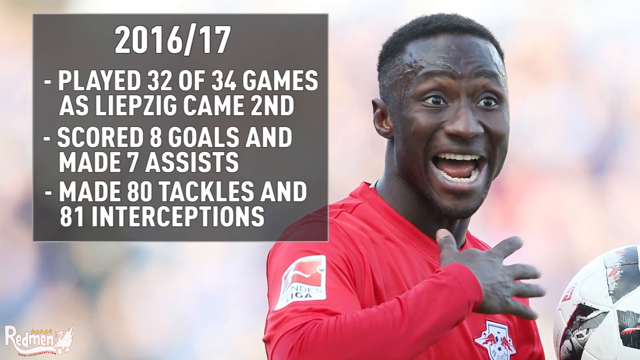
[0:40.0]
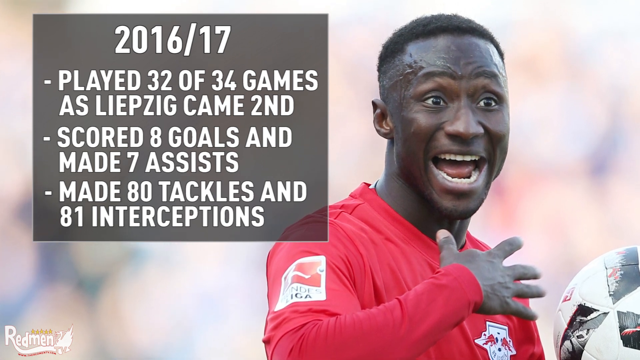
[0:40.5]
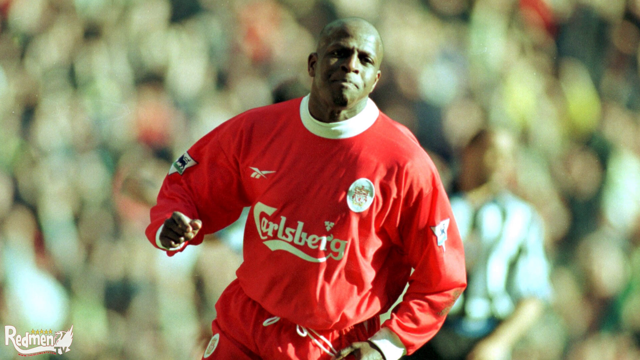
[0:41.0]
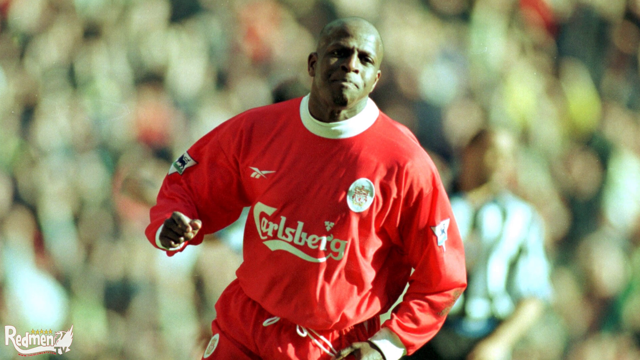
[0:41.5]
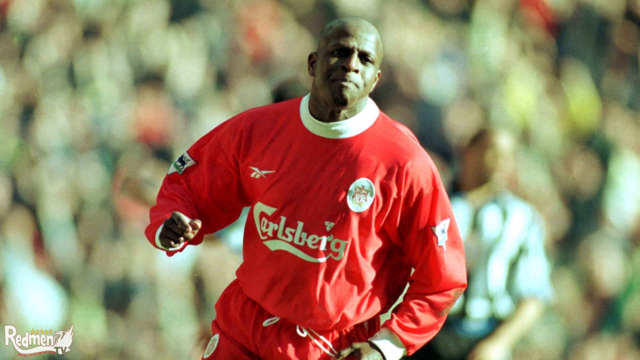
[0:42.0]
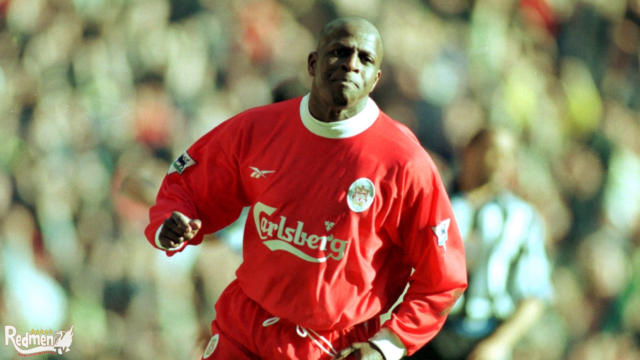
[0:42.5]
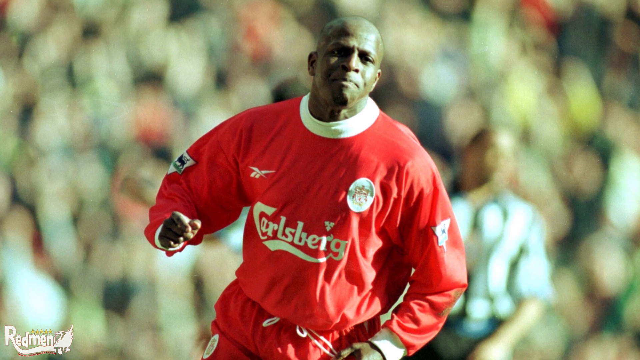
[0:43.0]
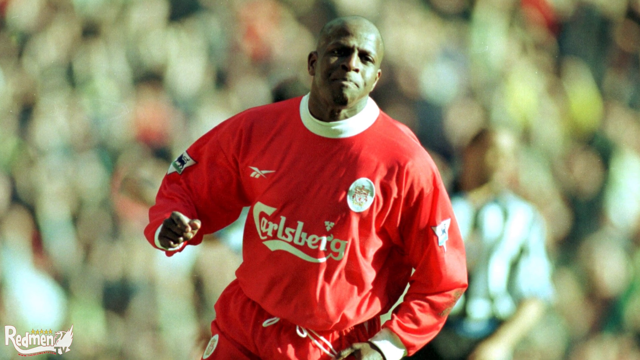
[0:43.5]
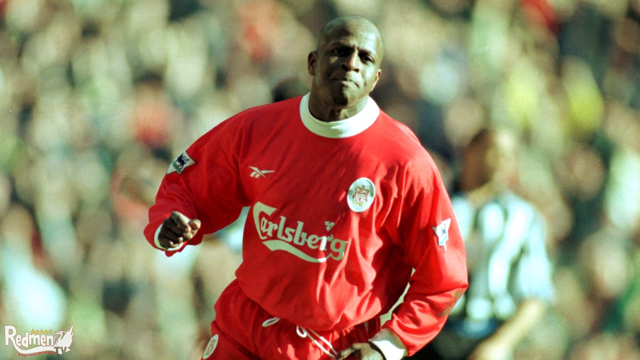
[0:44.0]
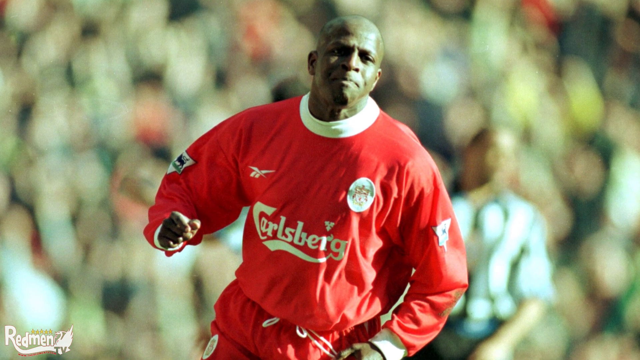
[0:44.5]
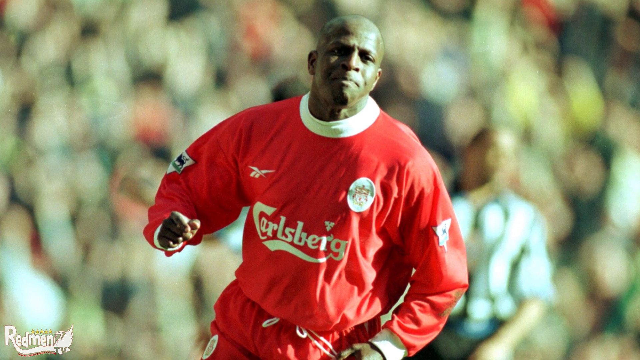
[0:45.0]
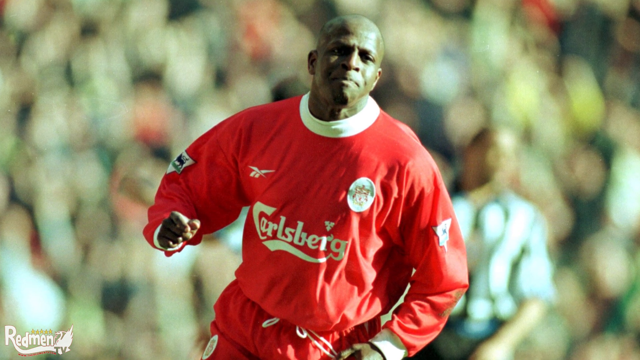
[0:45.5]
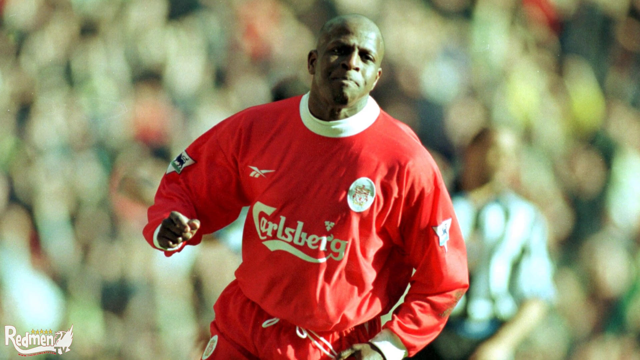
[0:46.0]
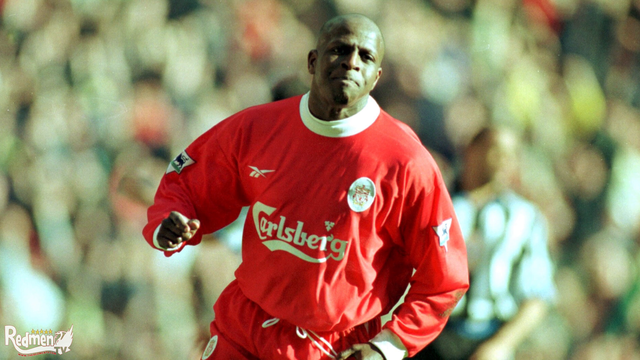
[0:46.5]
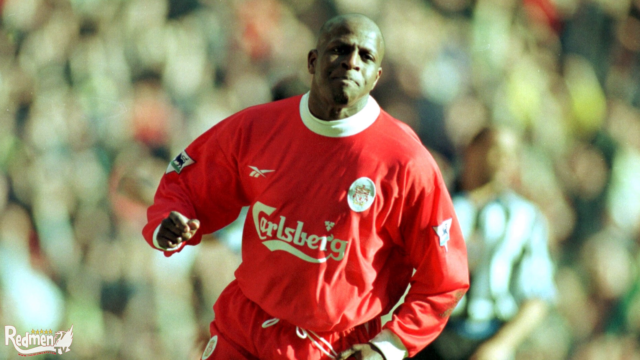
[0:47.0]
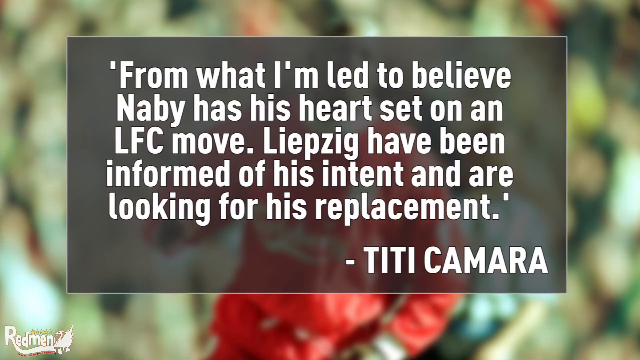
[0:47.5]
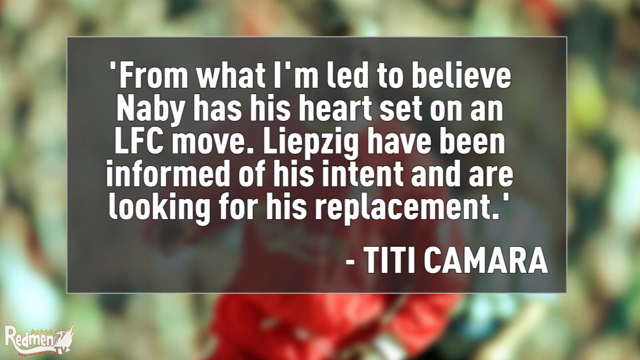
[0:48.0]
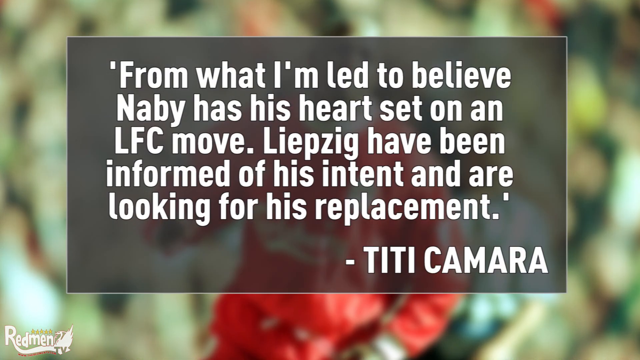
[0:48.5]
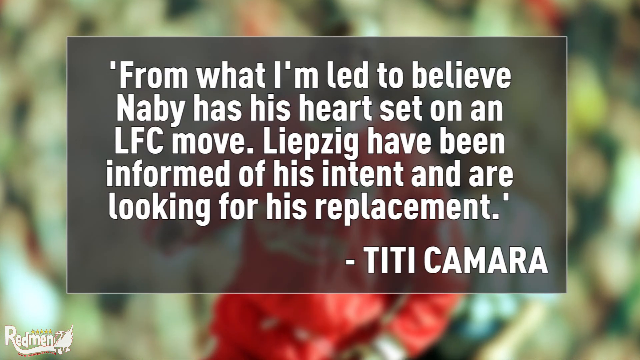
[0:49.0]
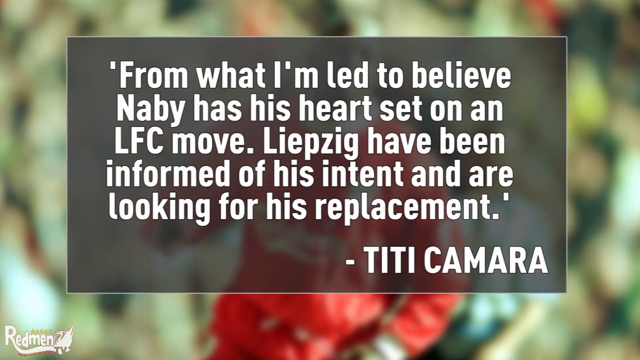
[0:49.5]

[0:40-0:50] A soccer player in a red jersey is shown with text that reads: 2016-17, played 32 of 34 games as Leipzig came second, scored eight goals and made seven assists, made 80 tackles and 81 interceptions. An older man in a red jersey or jacket then appears. Finally, a quote is shown, beginning "from what I've led to believe maybe Naby has his heart so set on it LFC move", stating that Leipzig "have been informed of his intent and are looking for his replacement", and naming Camara, spelled C-A-M-A-R-A.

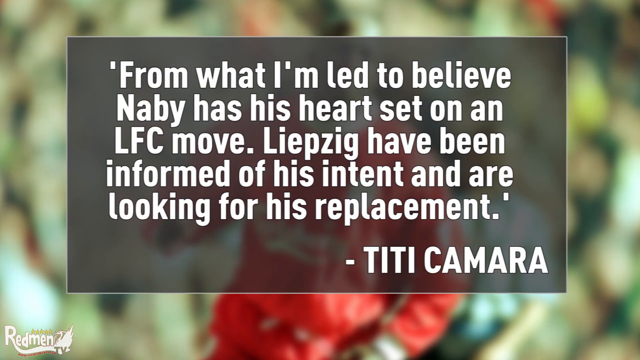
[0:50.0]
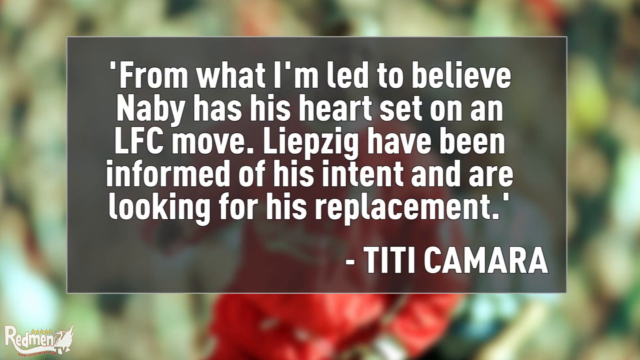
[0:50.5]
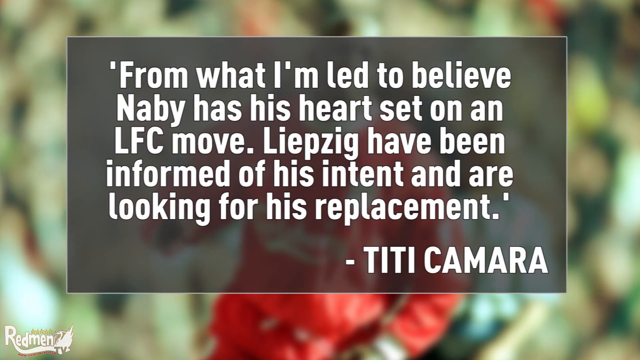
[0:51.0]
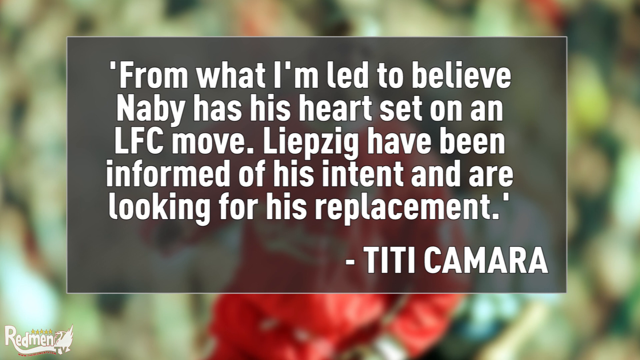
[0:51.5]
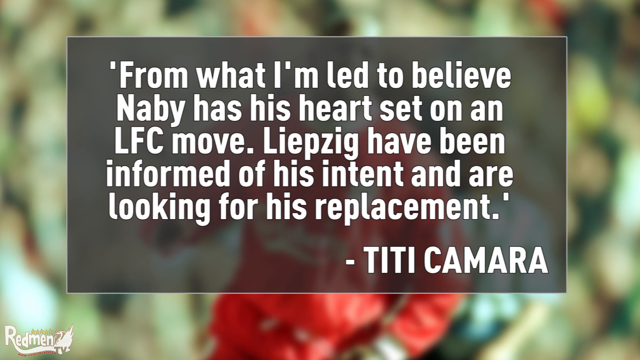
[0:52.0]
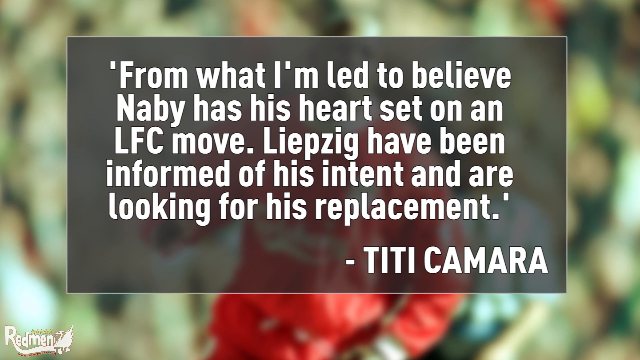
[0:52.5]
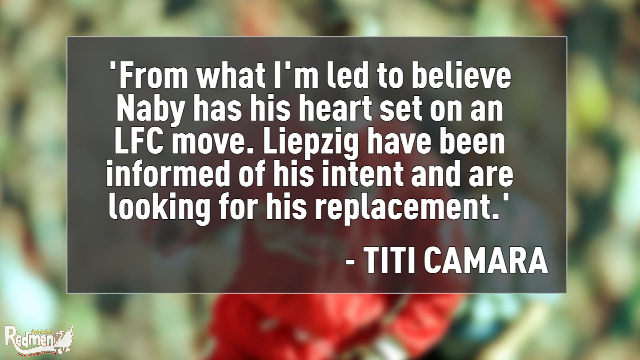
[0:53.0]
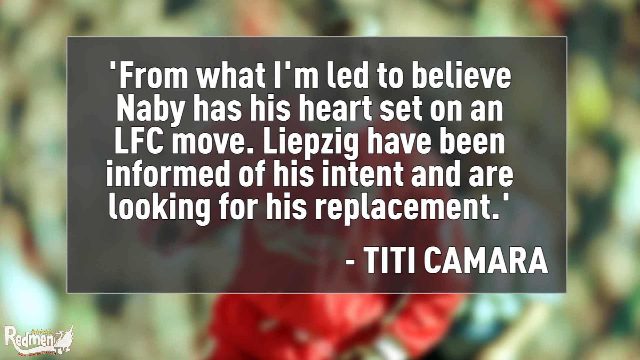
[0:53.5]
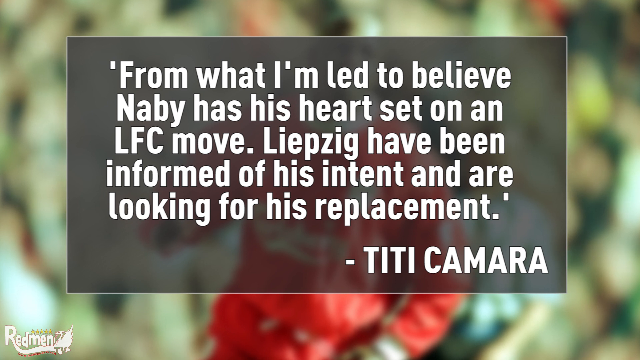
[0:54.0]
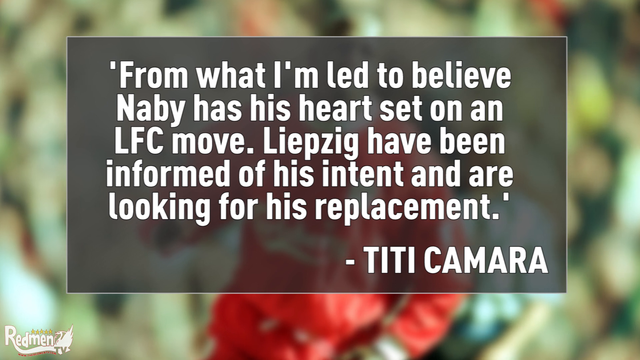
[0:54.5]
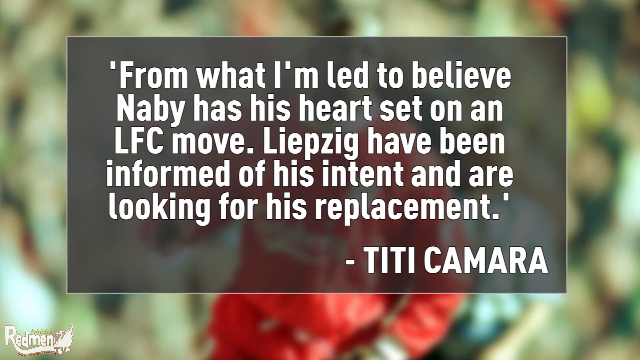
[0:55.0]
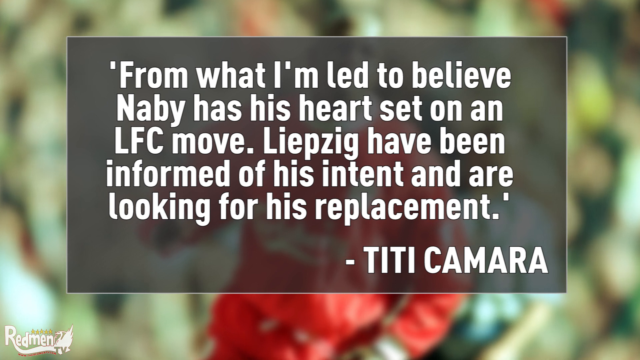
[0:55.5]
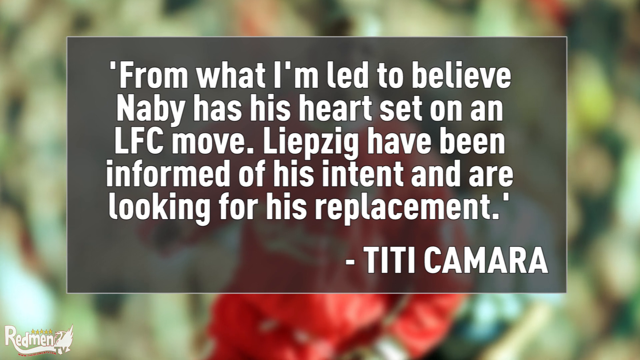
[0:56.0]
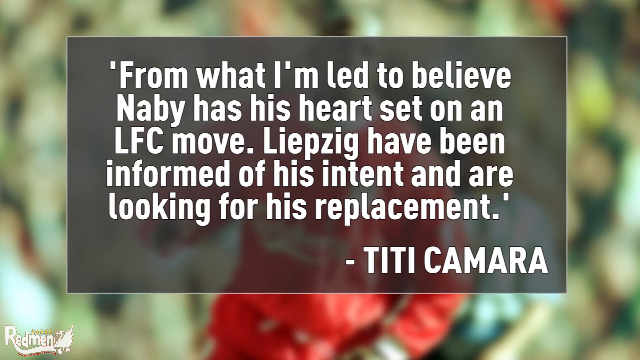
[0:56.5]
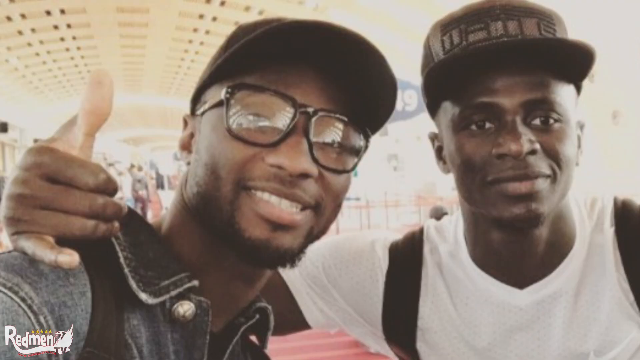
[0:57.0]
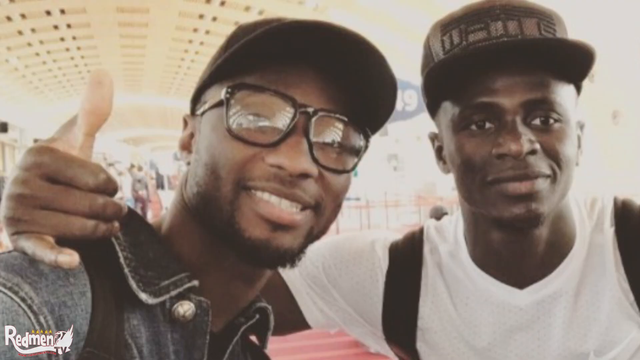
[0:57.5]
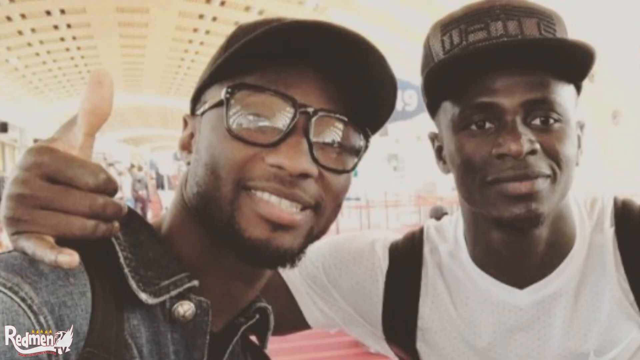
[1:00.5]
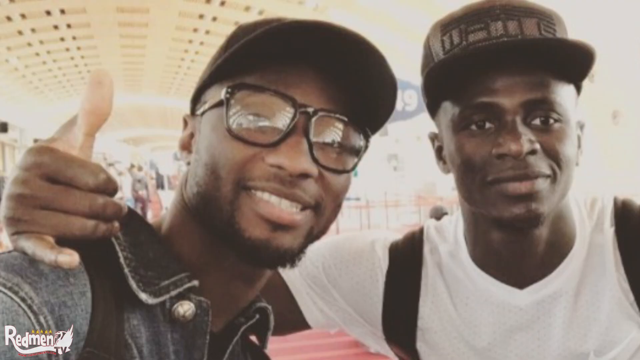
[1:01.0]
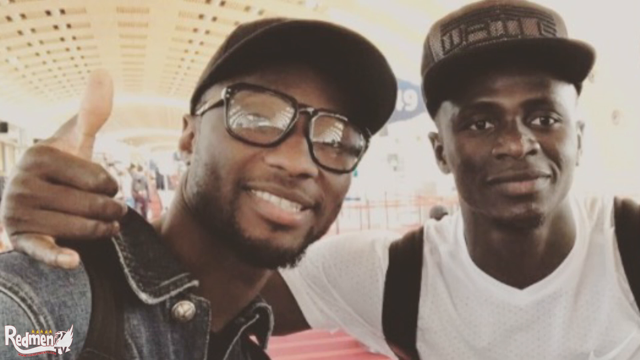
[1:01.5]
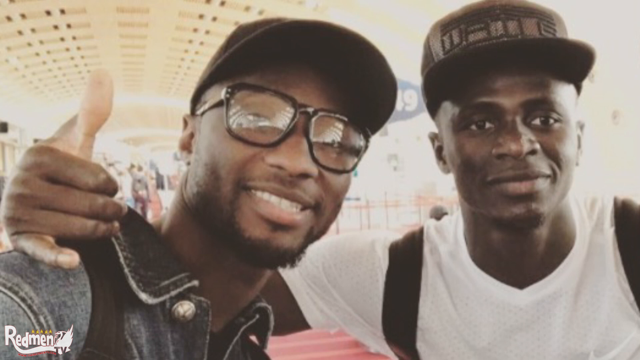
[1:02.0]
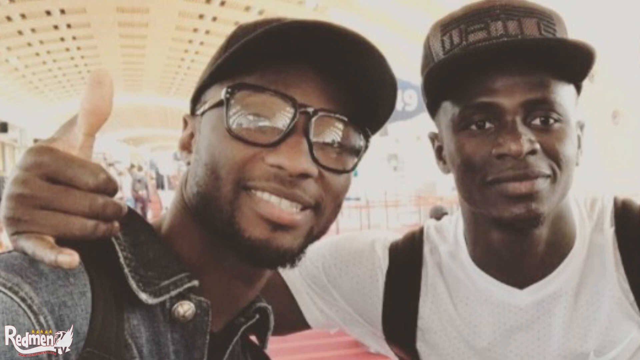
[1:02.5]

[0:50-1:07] A quote is on the screen: "from what I'm led to believe, maybe Naby has his heart set on an LFC move." It continues that Leipzig "have been informed of his intent and are looking for his replacement", naming Kamara, spelled C-A-M-A-R-A. "Redmond TV" appears at the bottom of the screen. A picture then shows two smiling African-American men, possibly two soccer players, apparently at an airport. Both wear hats, and one of them has glasses; facial hair is also visible.